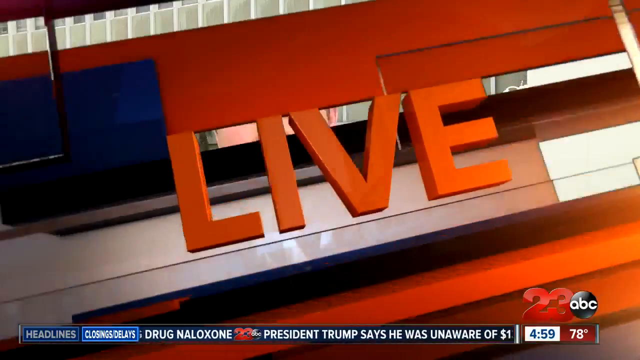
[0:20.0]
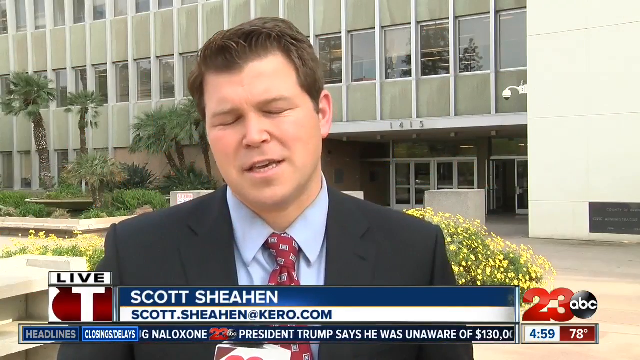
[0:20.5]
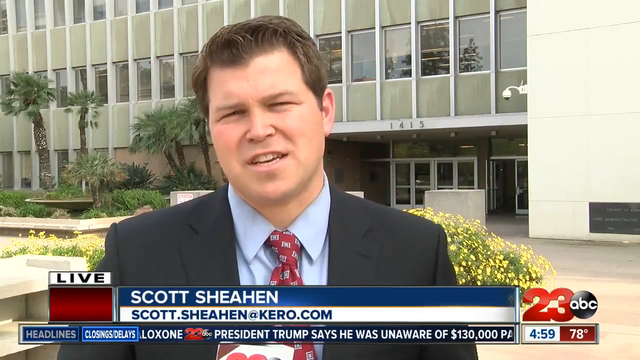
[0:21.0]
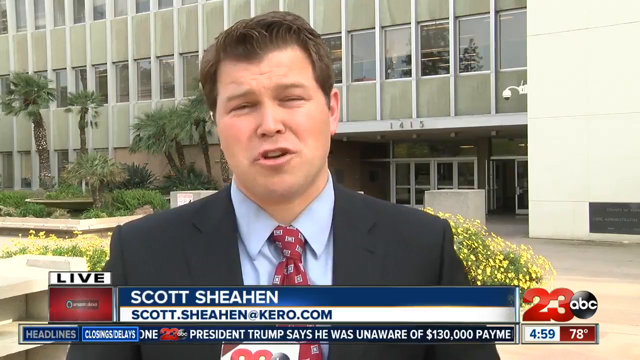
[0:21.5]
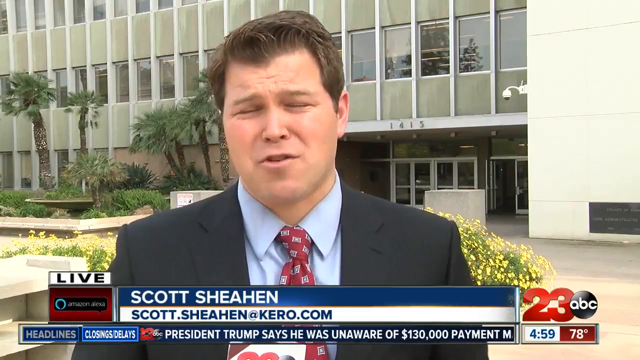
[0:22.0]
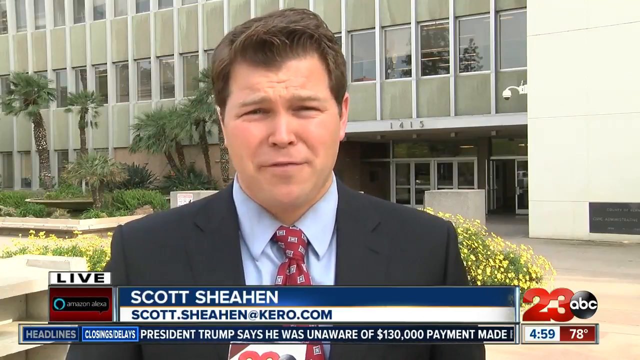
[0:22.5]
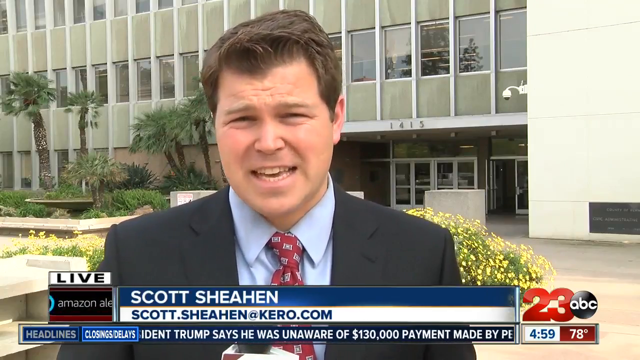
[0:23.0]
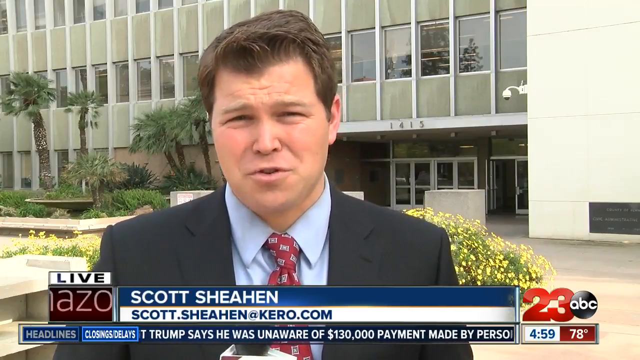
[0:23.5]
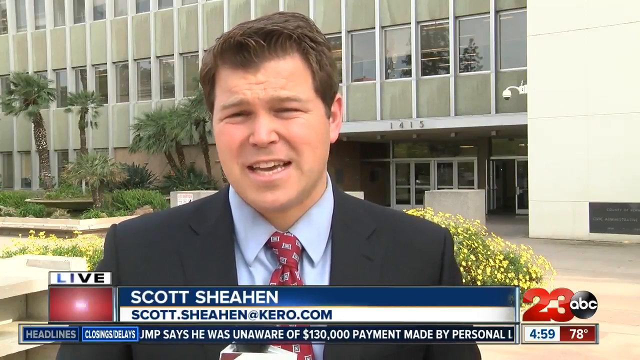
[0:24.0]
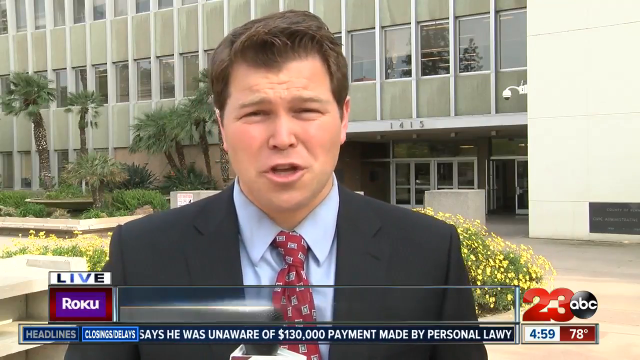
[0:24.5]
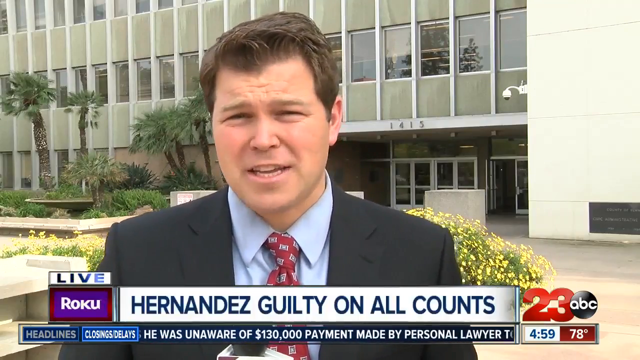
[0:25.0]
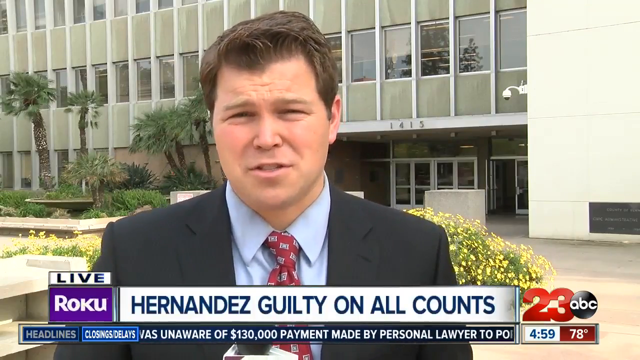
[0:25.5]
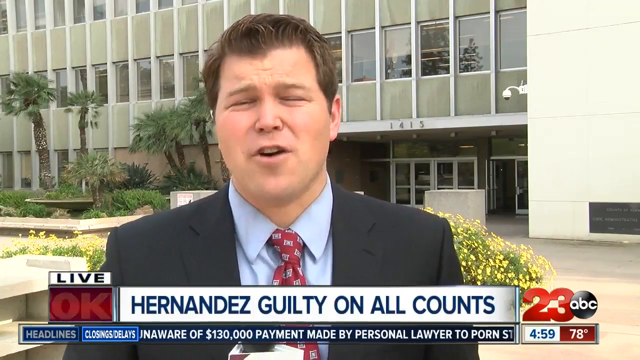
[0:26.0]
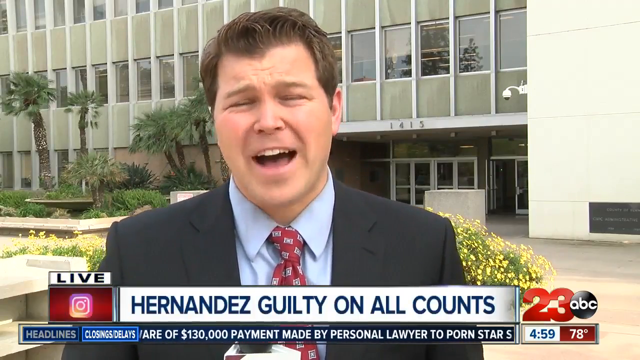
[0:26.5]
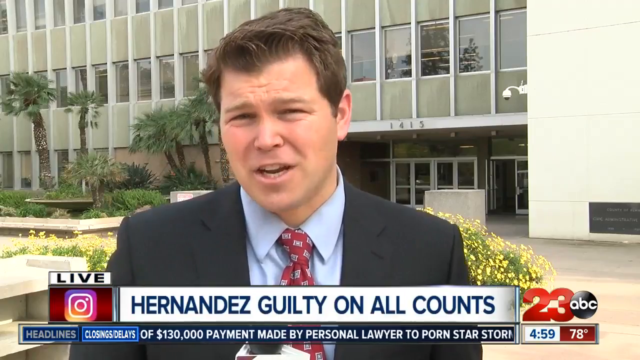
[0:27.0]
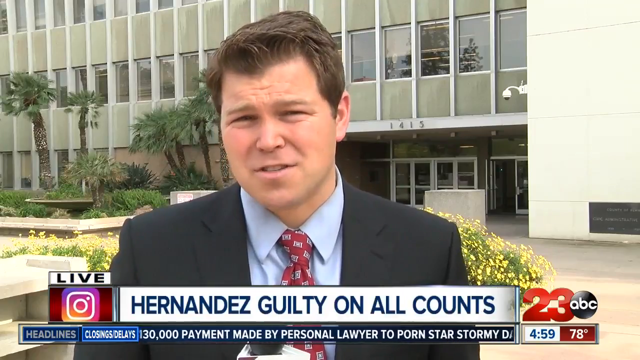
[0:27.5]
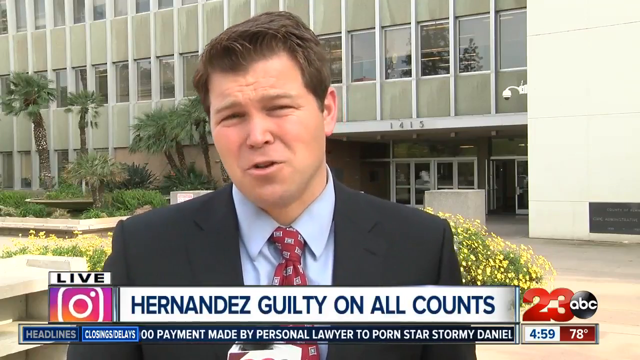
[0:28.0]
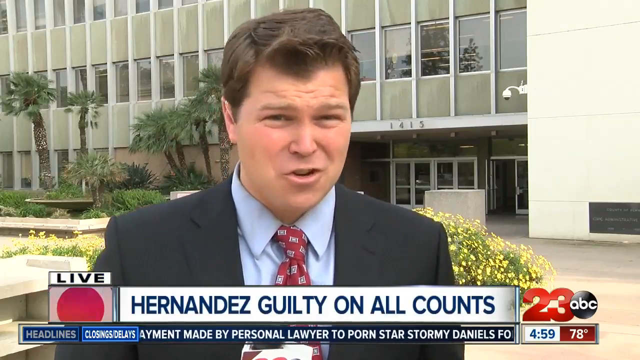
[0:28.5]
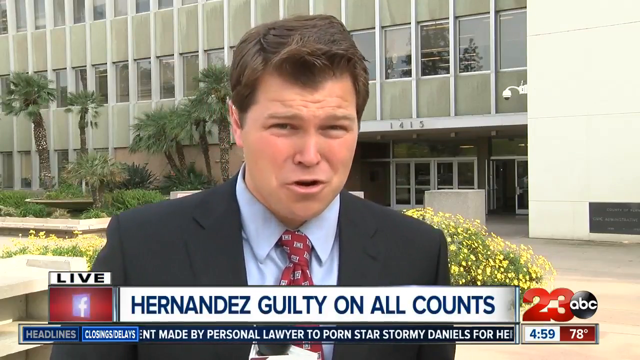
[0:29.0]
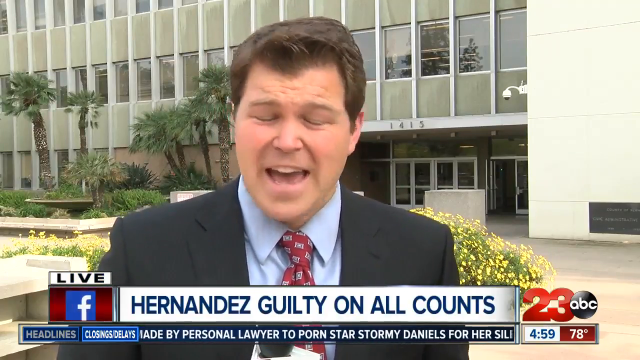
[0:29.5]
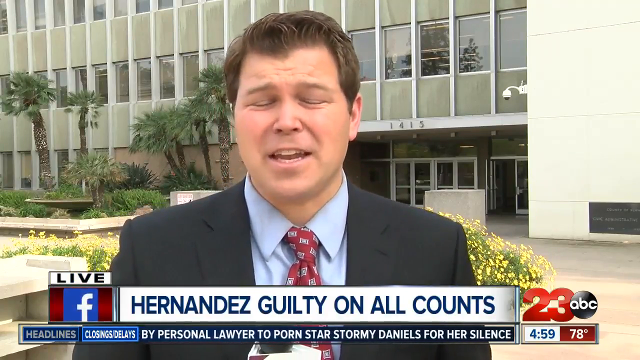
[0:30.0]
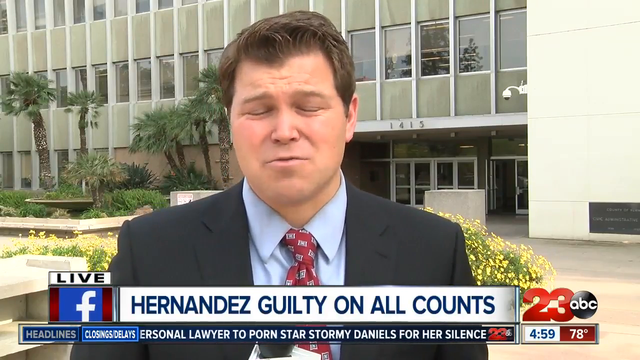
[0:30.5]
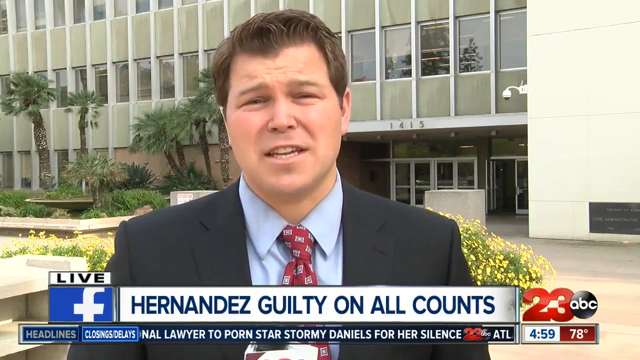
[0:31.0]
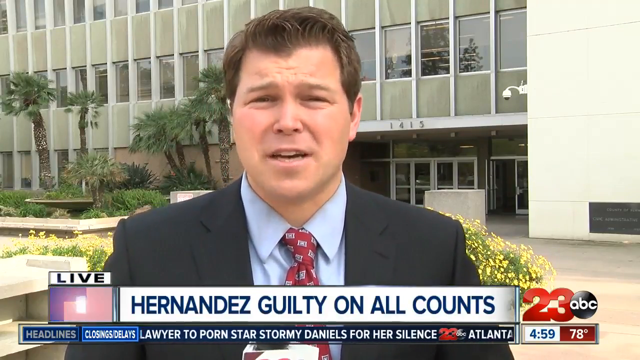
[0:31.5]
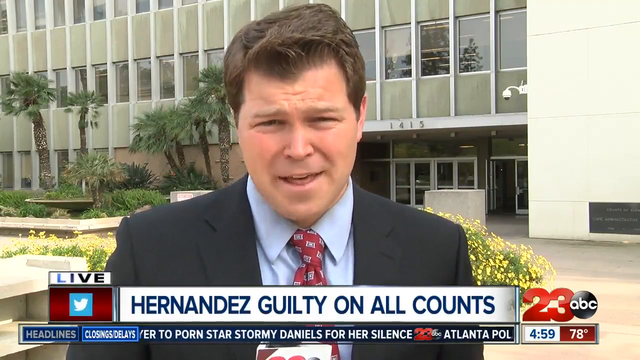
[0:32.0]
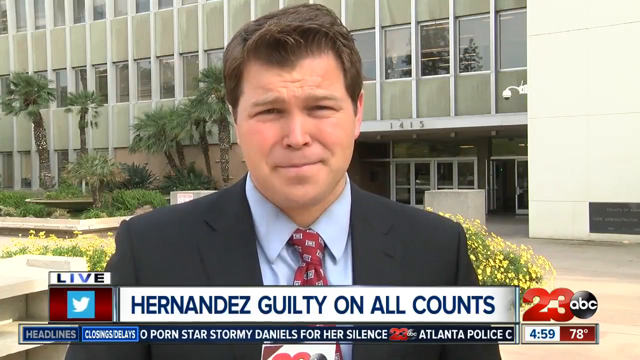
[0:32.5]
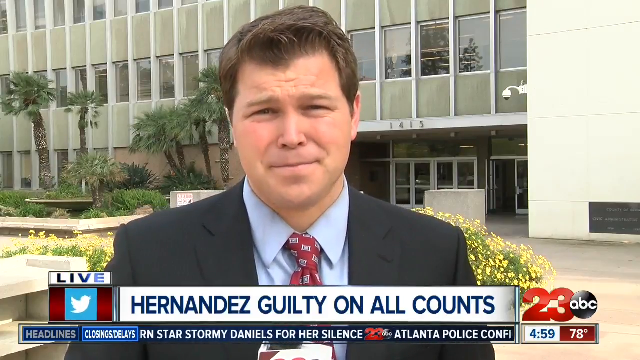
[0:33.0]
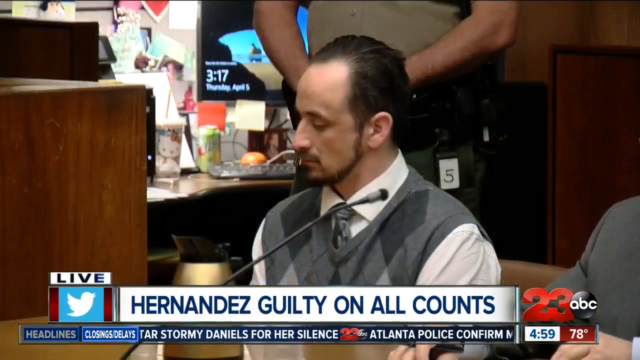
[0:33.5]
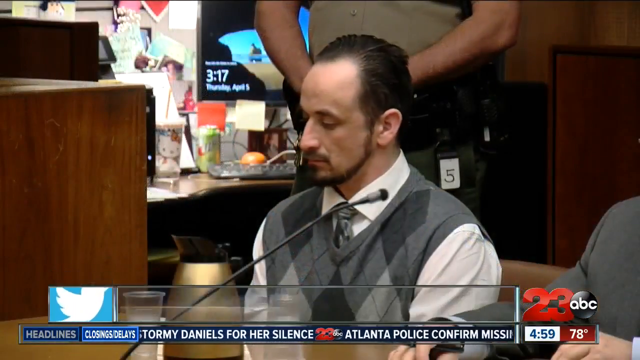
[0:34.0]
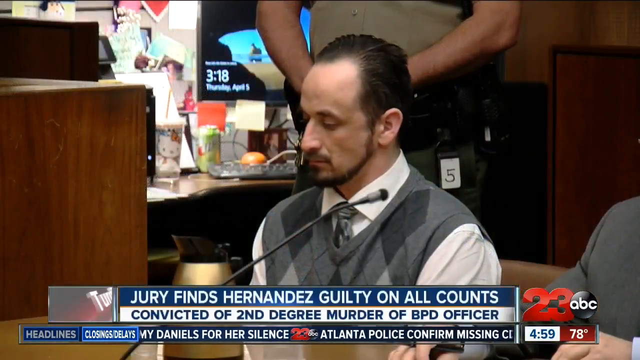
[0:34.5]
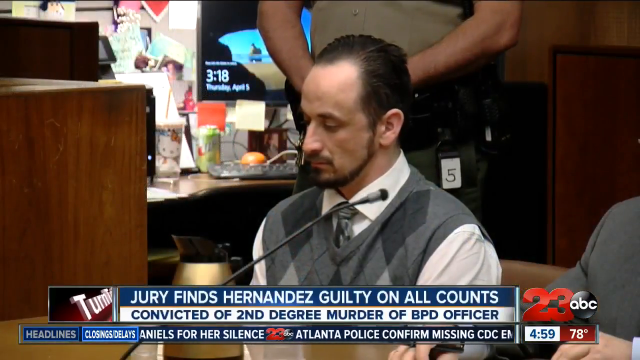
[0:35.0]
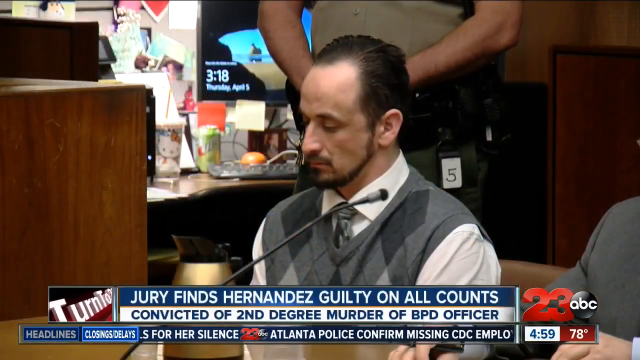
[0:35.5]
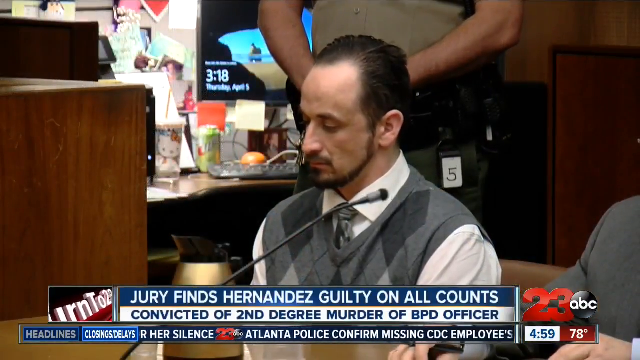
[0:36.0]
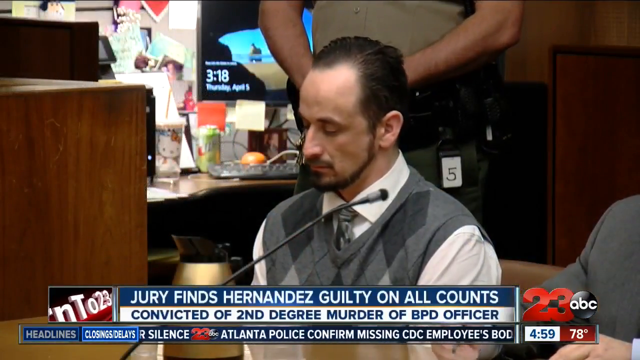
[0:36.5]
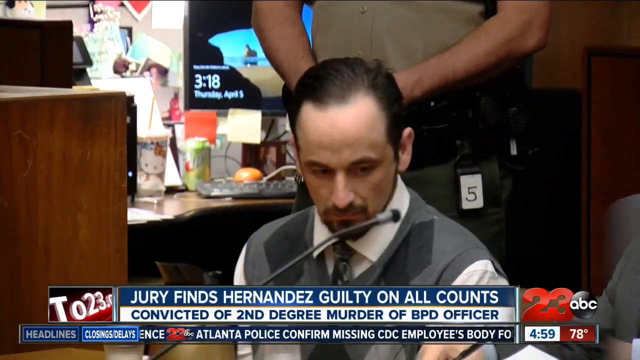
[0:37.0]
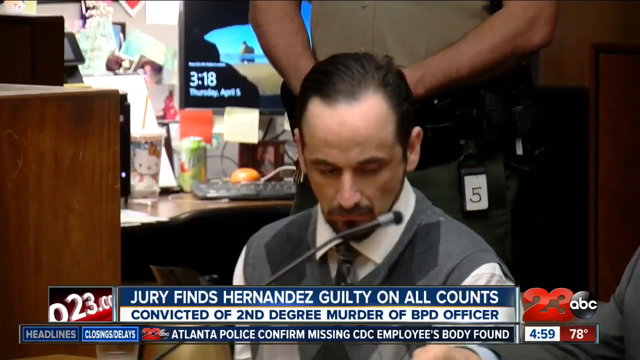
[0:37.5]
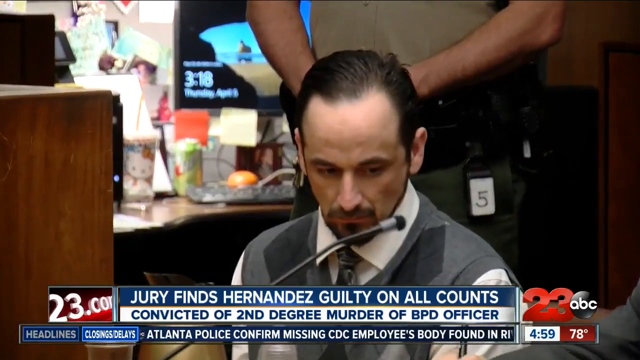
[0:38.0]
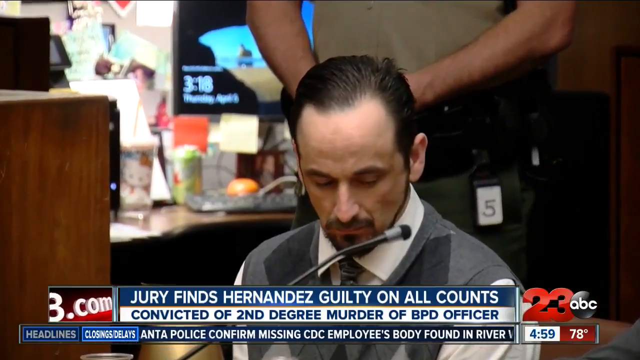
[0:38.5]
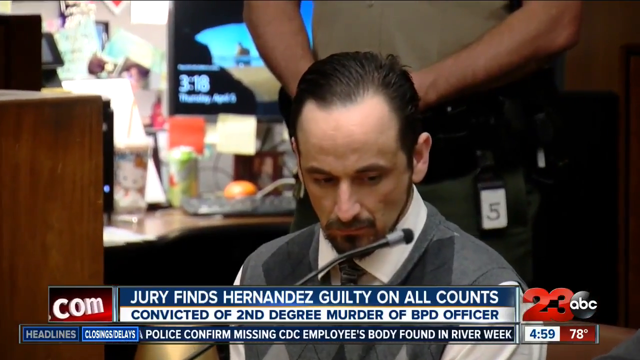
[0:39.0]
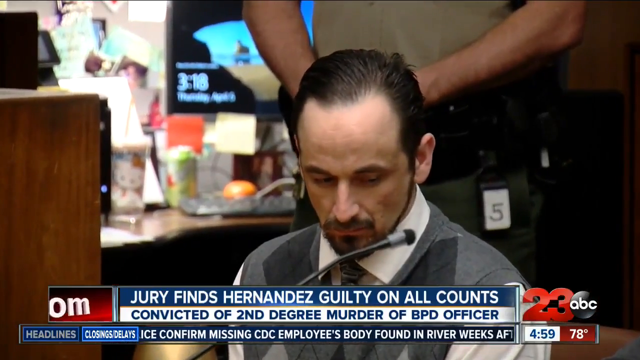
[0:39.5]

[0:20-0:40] The ABC 23 broadcast continues with the headline "Hernandez guilty on all counts" and is marked as live. The reporter, Scott, stands outside a building with the address 1415, probably associated with Hernandez. Footage shows Hernandez at his trial as the jury finds him guilty on all counts; the screen says he was convicted of second-degree murder of an officer. Hernandez looks like he knows there is a guilty verdict and appears very nervous. A computer in the background shows the time, 3:18, and the date, Thursday, April 5; no year is shown. A 7 Up can is also visible in the background.